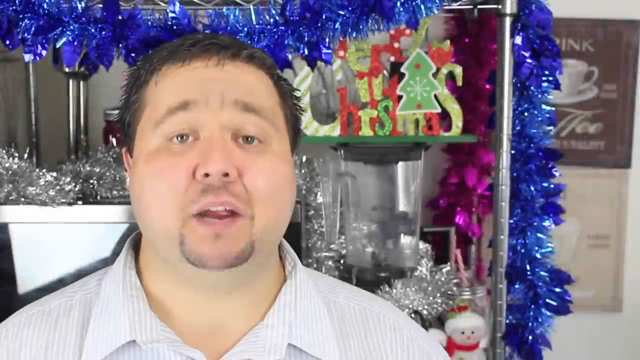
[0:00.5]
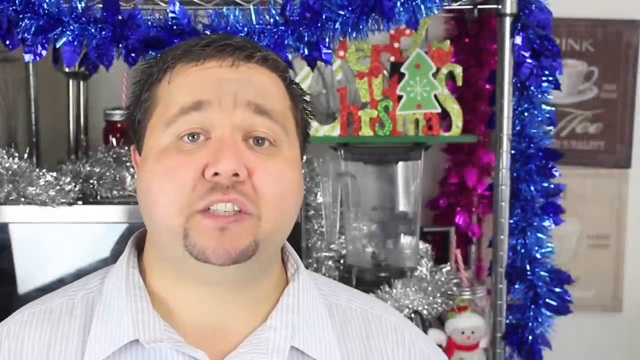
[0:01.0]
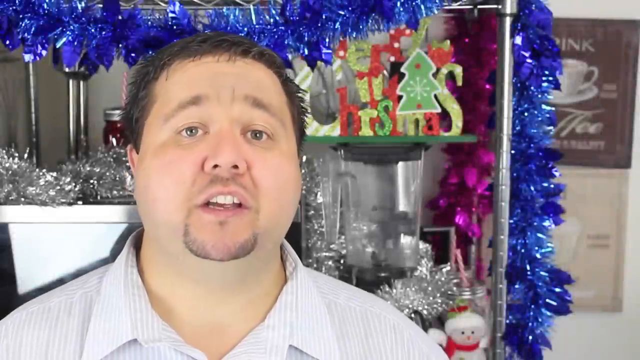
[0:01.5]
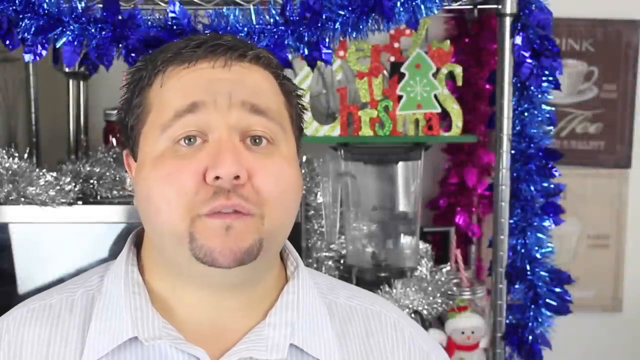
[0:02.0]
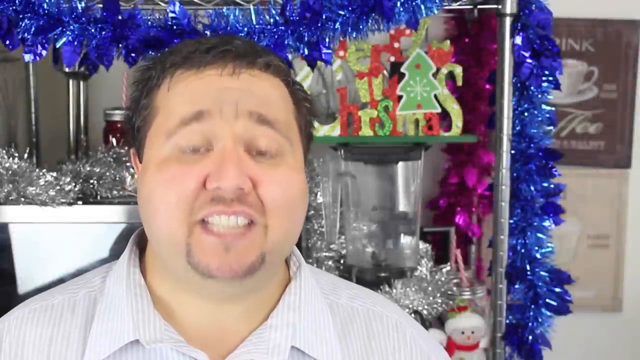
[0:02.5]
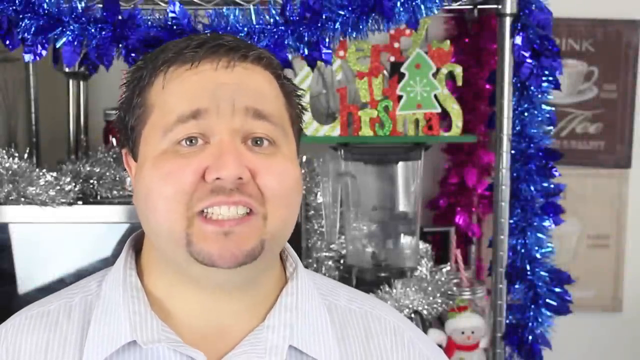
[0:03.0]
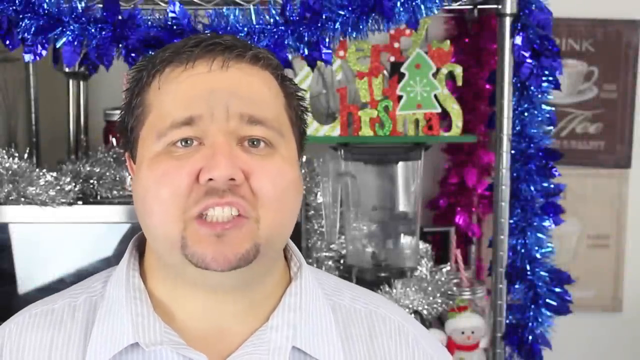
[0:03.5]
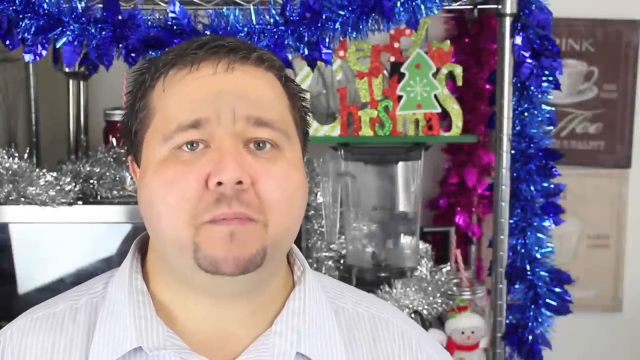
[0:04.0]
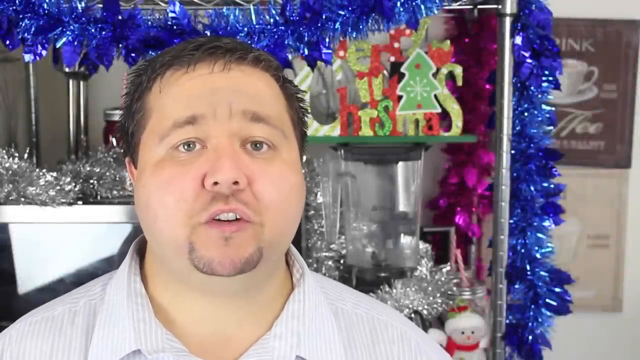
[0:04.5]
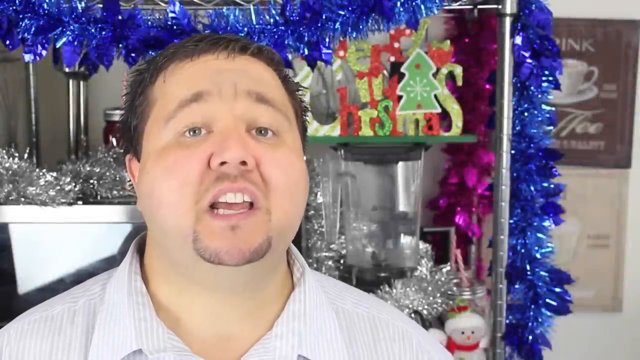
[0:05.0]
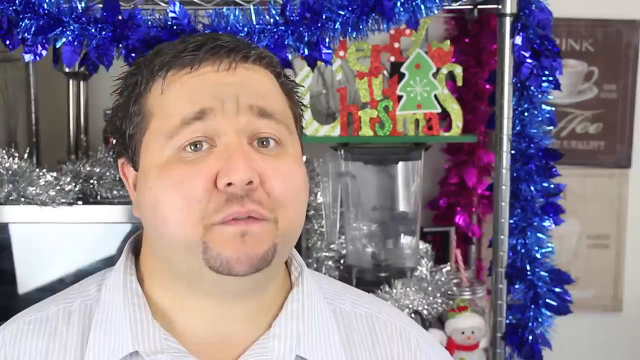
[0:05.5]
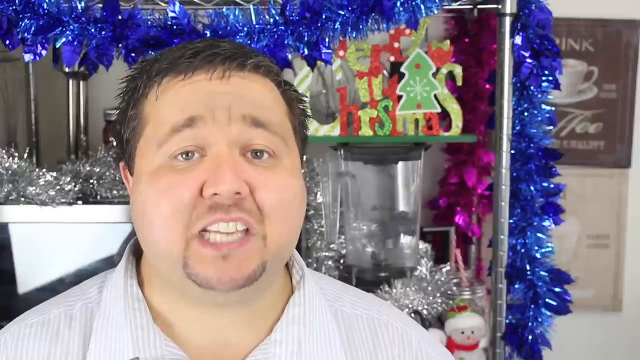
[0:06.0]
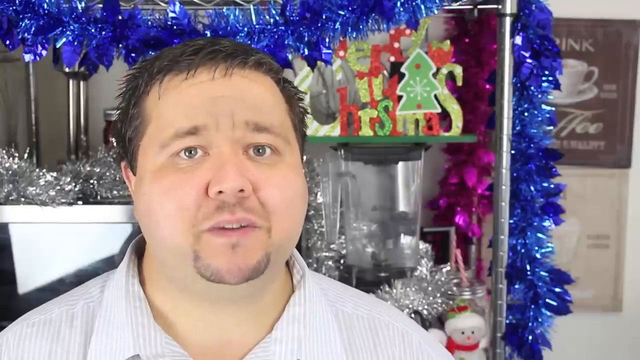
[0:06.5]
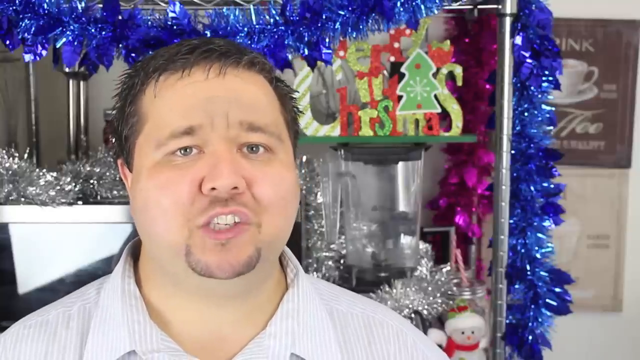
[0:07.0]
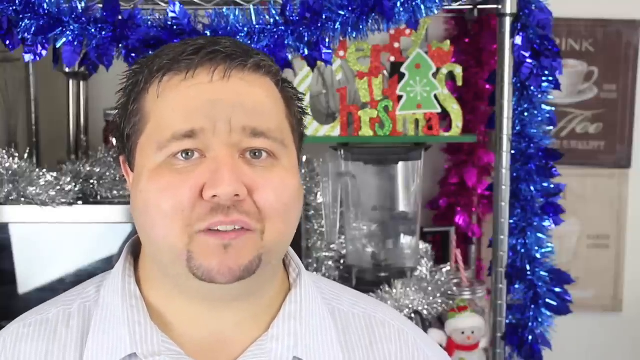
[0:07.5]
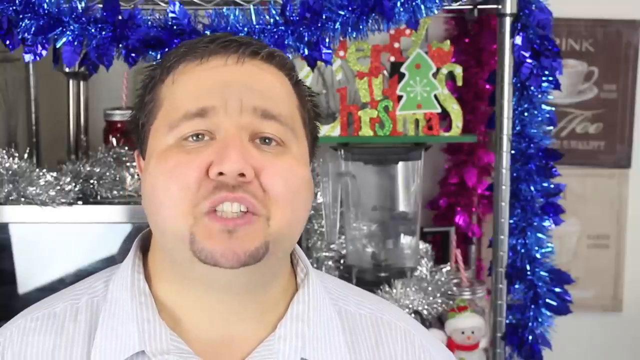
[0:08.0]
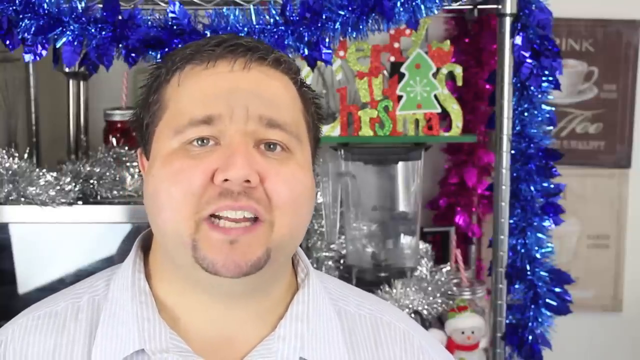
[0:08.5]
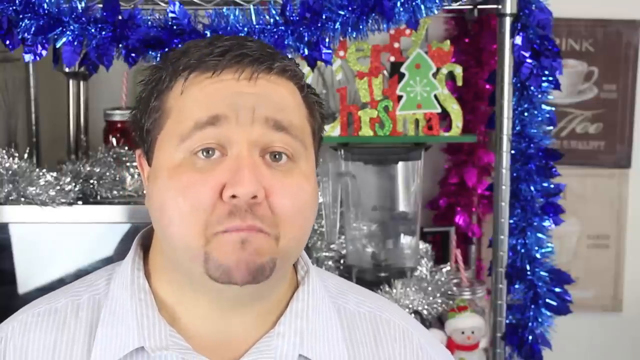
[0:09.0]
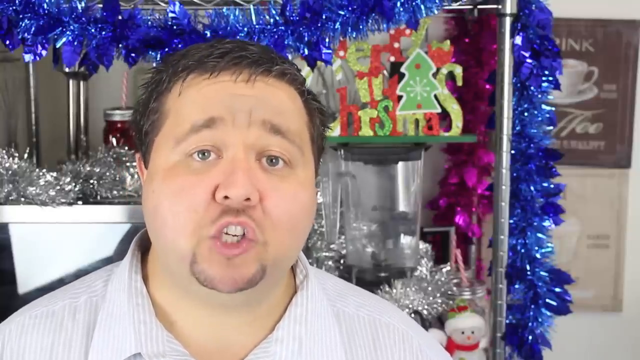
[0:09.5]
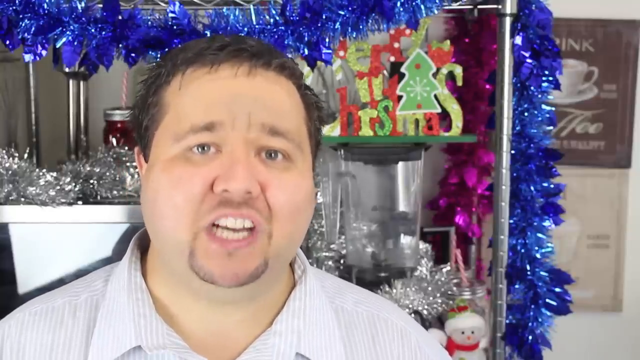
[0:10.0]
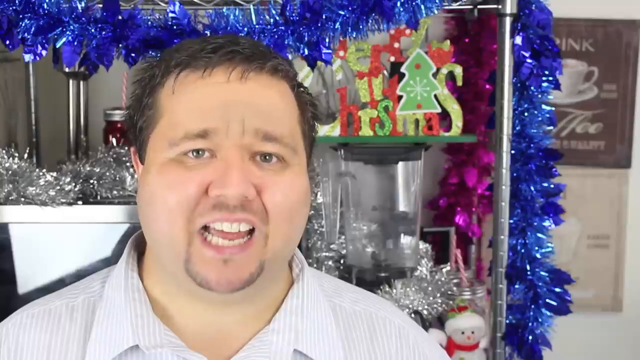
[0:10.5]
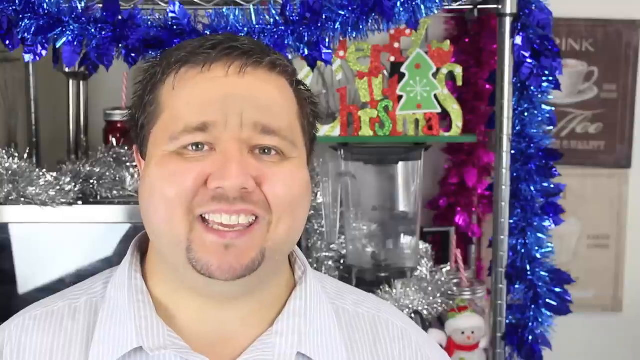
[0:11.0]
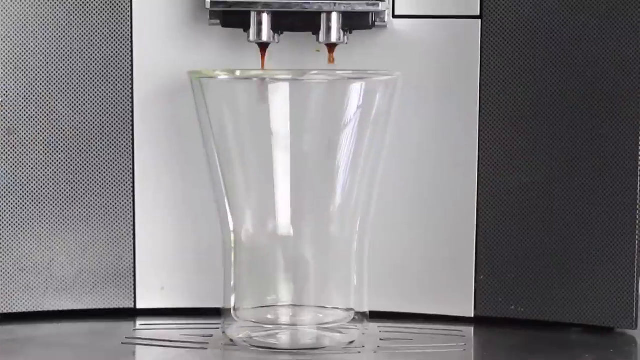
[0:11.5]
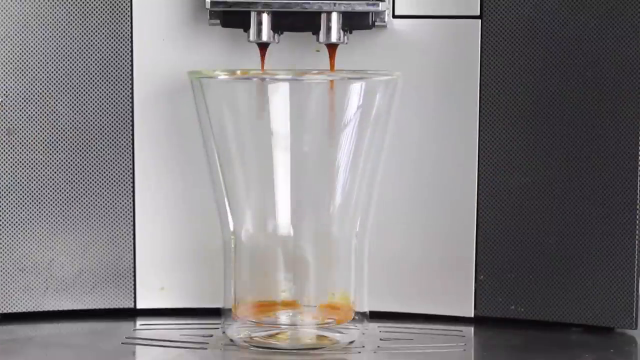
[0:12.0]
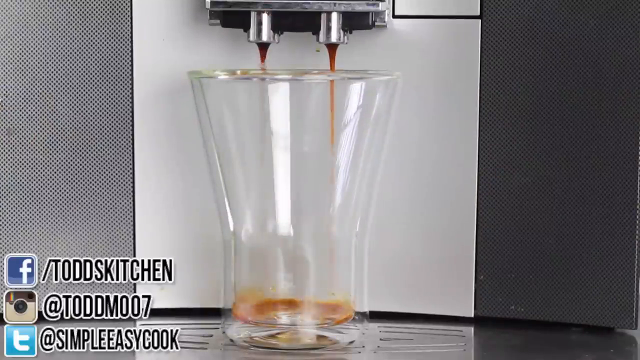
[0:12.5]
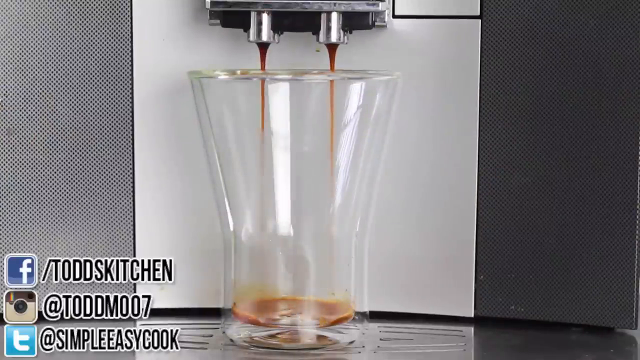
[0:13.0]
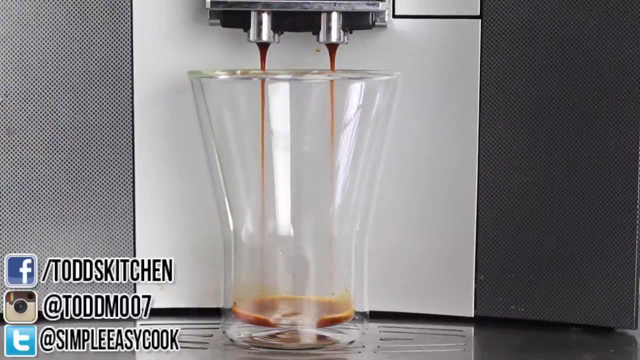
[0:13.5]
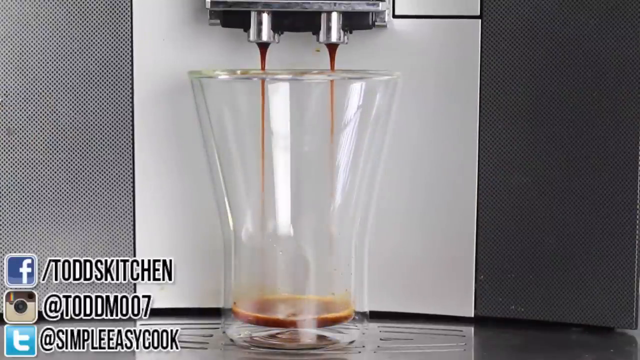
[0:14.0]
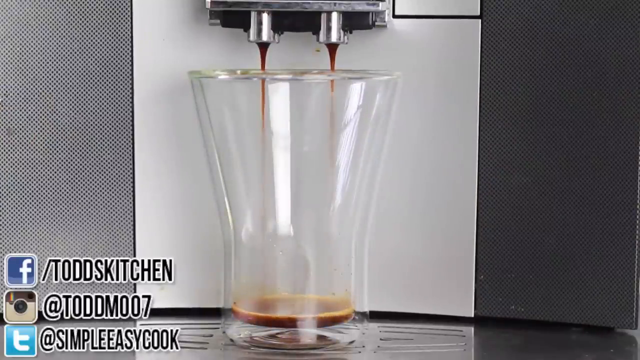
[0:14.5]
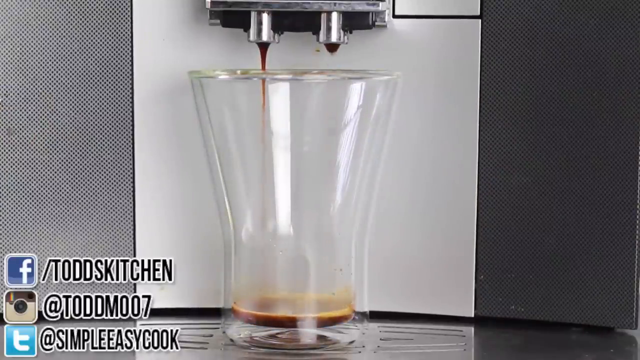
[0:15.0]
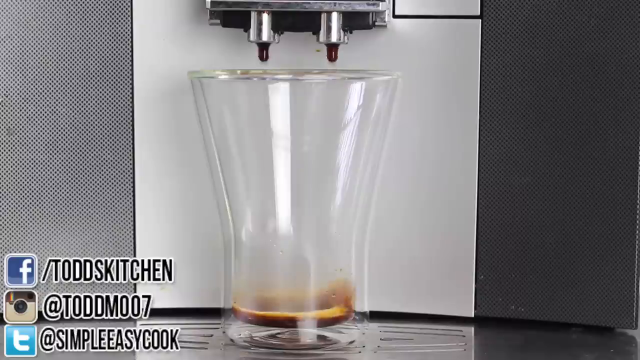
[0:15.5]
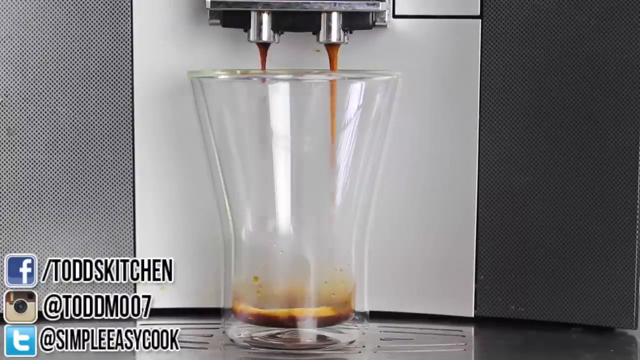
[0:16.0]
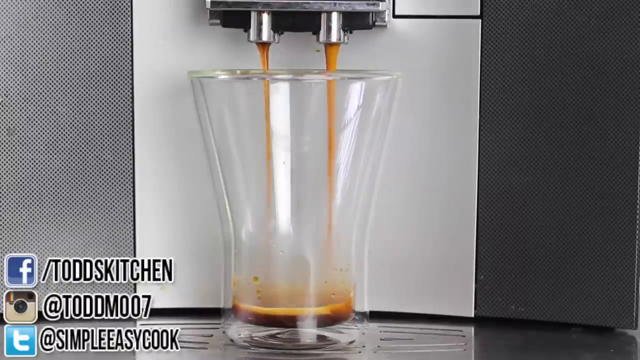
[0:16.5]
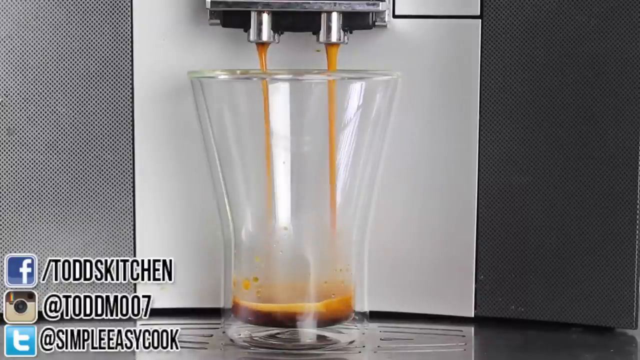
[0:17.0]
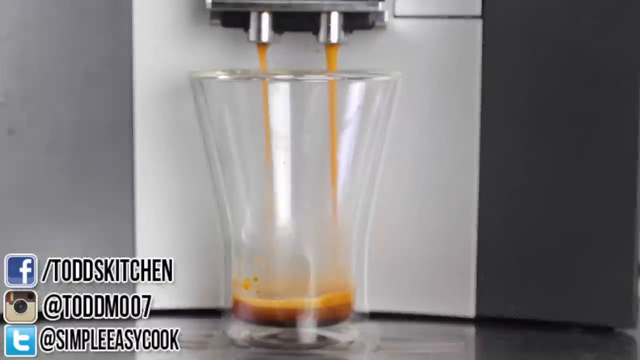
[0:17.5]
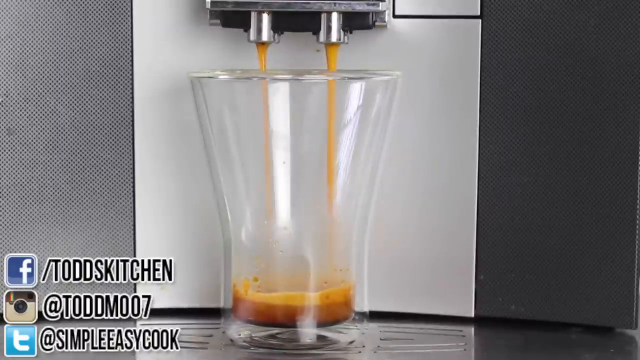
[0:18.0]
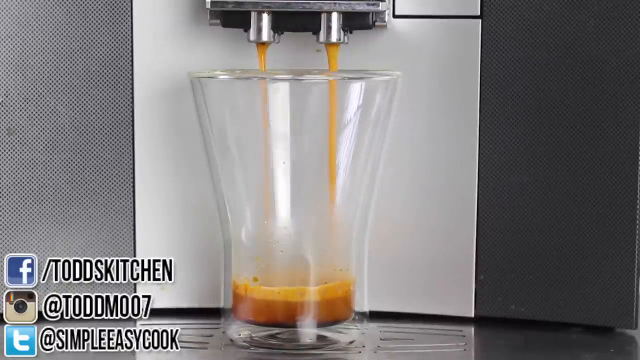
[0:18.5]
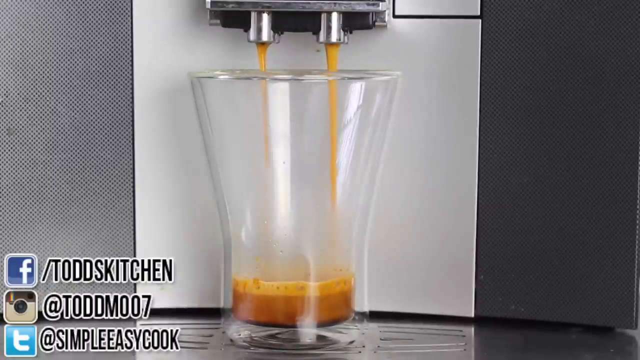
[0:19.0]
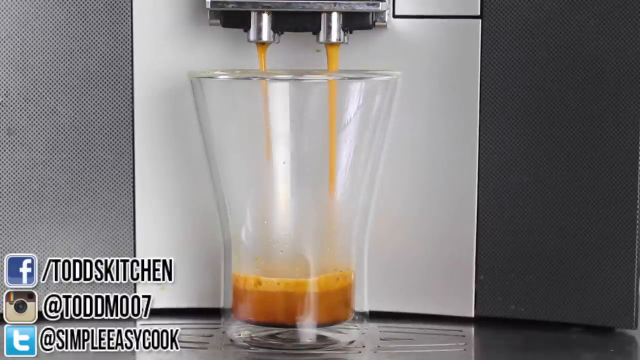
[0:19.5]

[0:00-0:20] A man speaks into the camera while standing in front of metal shelves holding Christmas decorations, tinsel and tree decorations. A sign in the upper right of the image urges viewers to drink coffee. The man wears a white and lavender vertically striped shirt. He is about 28 to 32 years old, with short brown hair, slate eyes, a small goatee and a rather heavy-set face. He arches his eyebrows and shows his even teeth as he talks. He shakes his head a little, but his hands are not visible as he keeps speaking in front of the shelf of Christmas decorations. The scene then changes to a black and white photograph of a glass beneath two spigots, with a brown liquid similar to coffee being poured into it. The glass is wider at the top than at the bottom: it angles inward over its top two-thirds, and then its sides go straight down to the bottom. The scale of the glass is hard to judge. A Facebook handle in the lower left identifies the source of the video as Todd's Kitchen, T-O-D-D-S. The brown liquid keeps dripping into the glass and foams at the top as it lands.